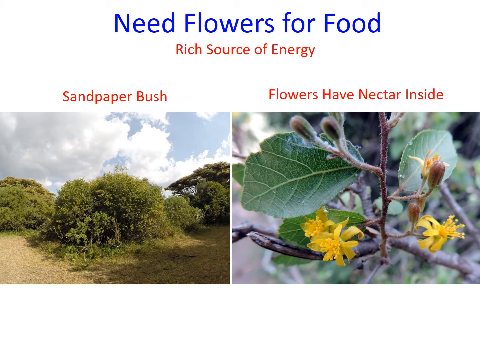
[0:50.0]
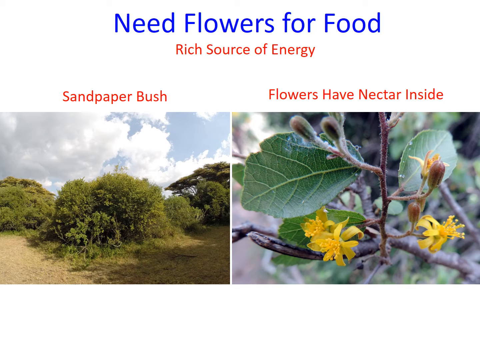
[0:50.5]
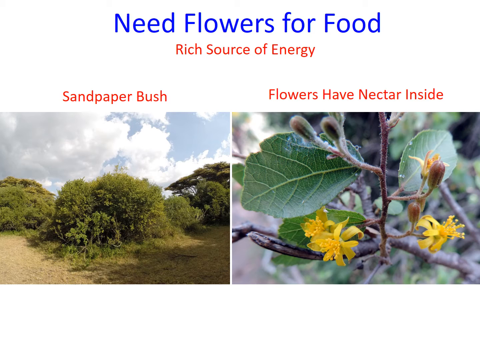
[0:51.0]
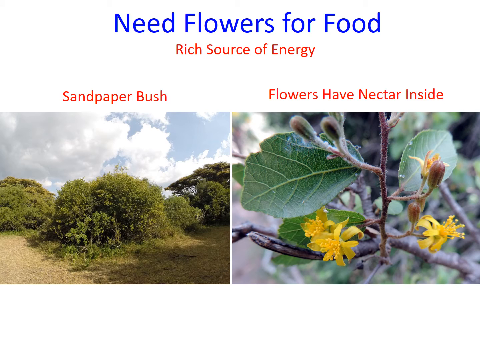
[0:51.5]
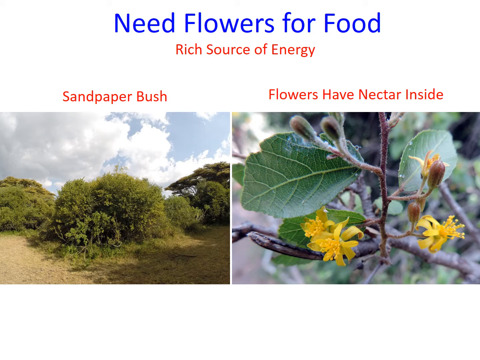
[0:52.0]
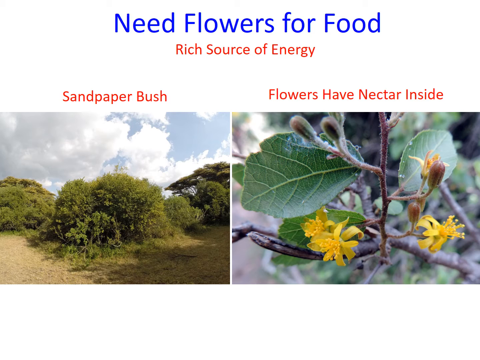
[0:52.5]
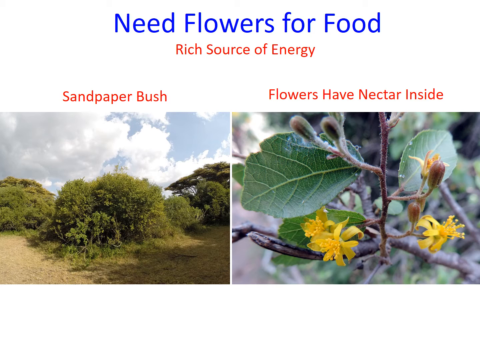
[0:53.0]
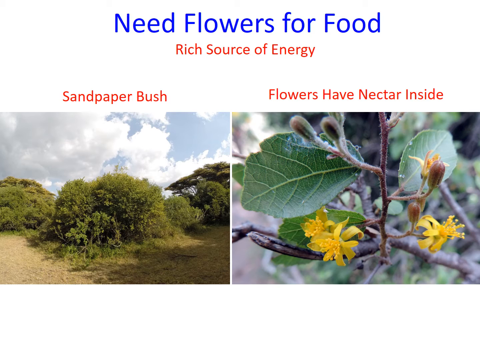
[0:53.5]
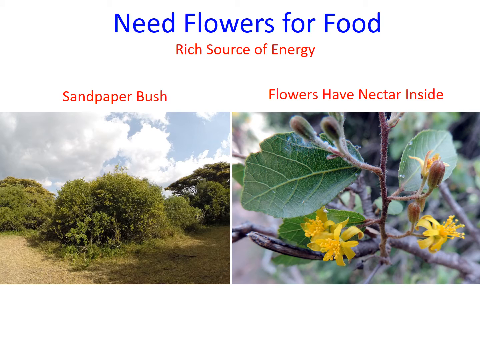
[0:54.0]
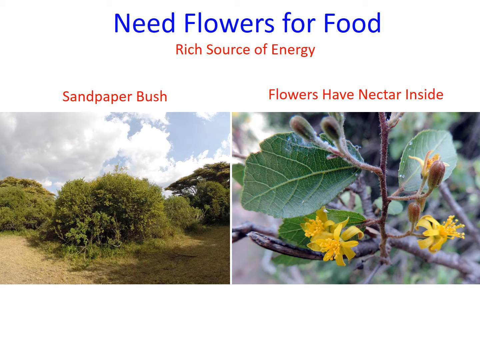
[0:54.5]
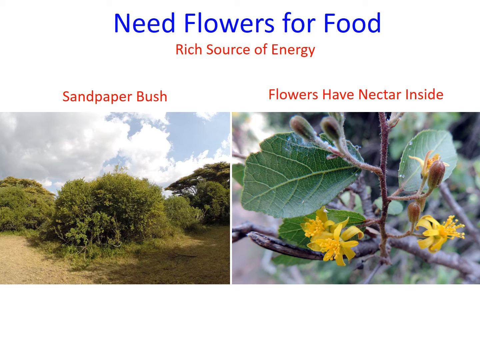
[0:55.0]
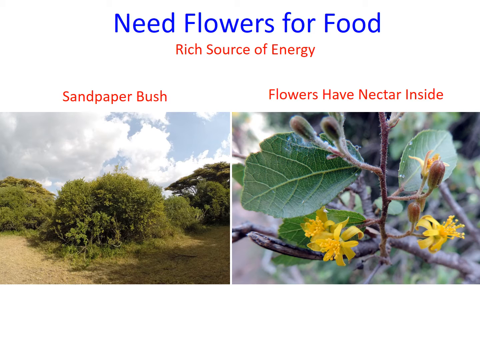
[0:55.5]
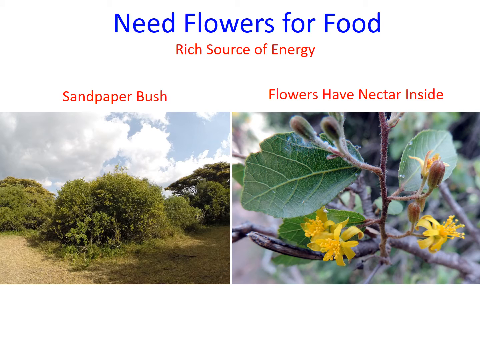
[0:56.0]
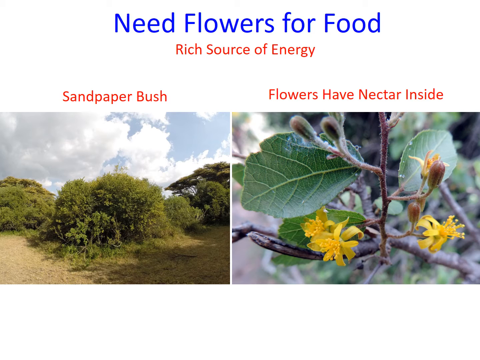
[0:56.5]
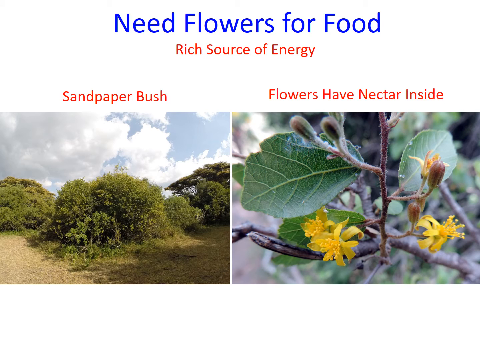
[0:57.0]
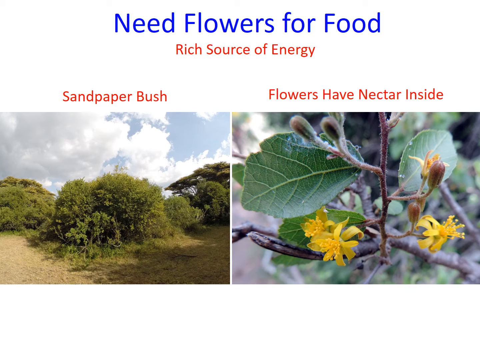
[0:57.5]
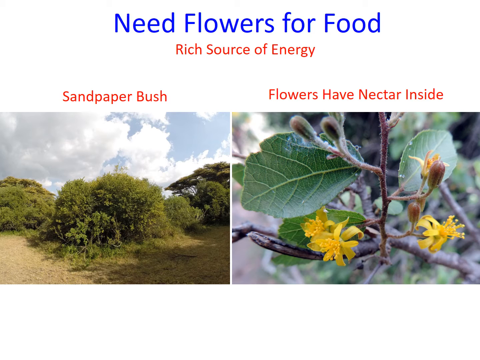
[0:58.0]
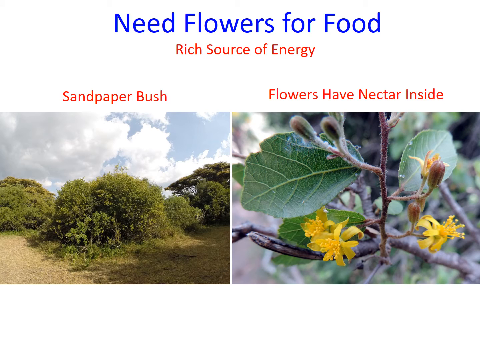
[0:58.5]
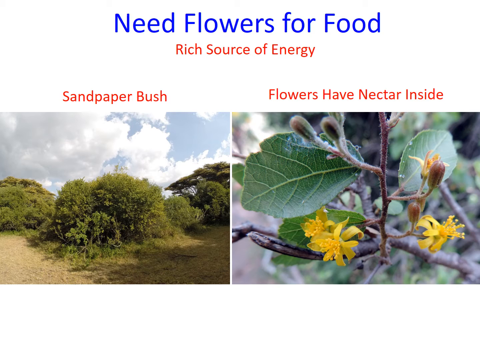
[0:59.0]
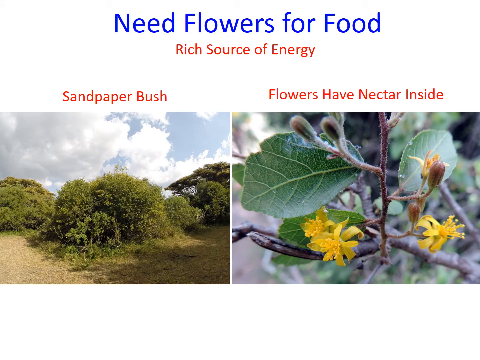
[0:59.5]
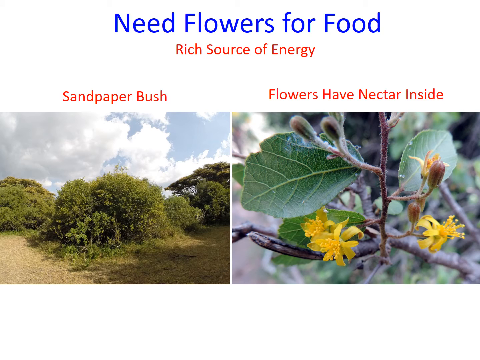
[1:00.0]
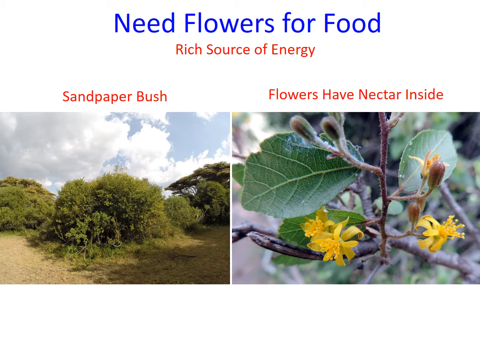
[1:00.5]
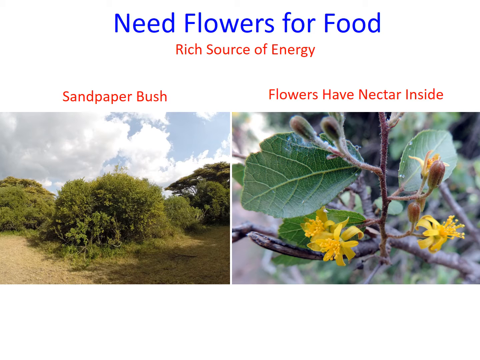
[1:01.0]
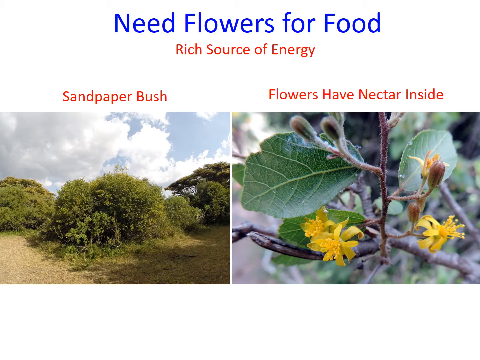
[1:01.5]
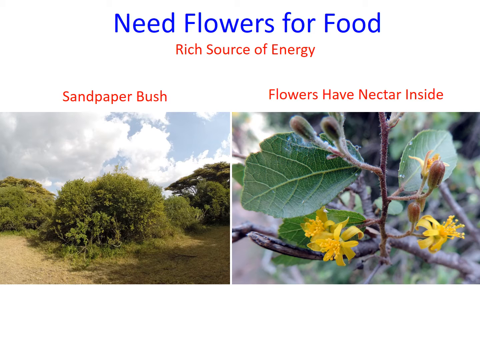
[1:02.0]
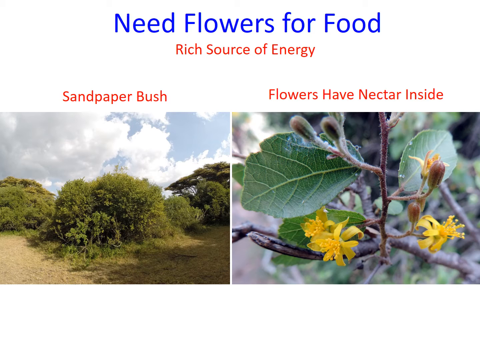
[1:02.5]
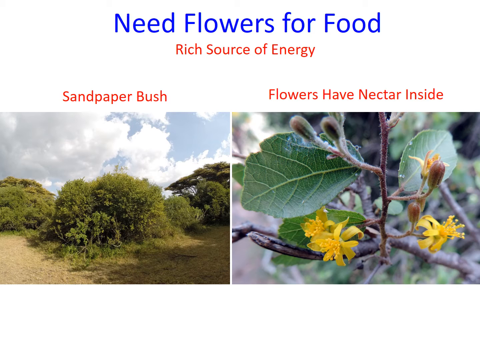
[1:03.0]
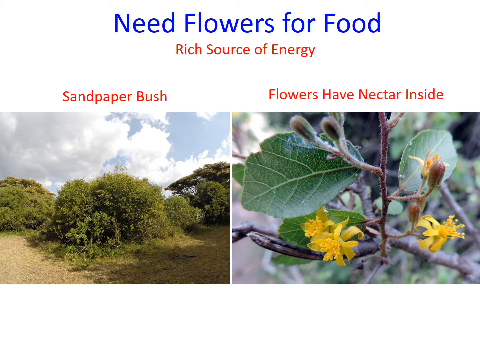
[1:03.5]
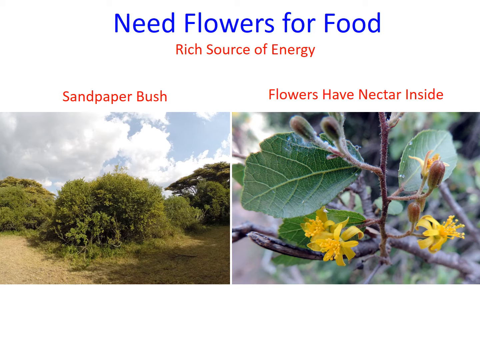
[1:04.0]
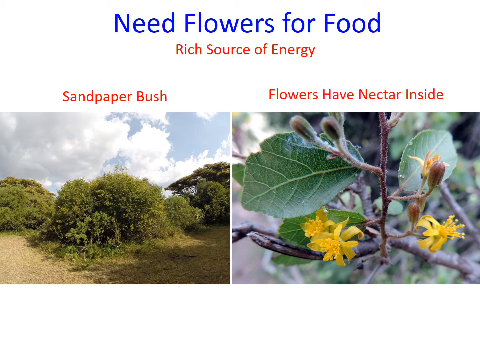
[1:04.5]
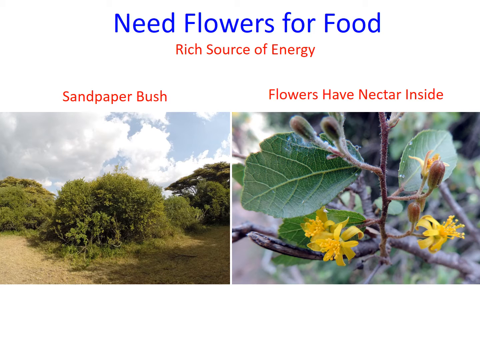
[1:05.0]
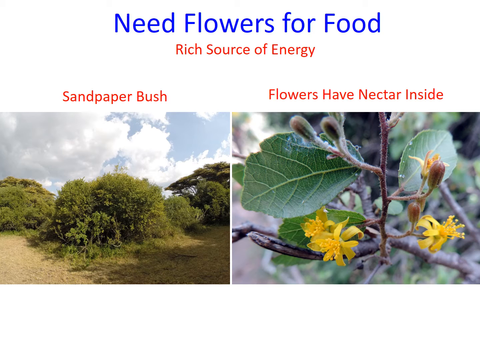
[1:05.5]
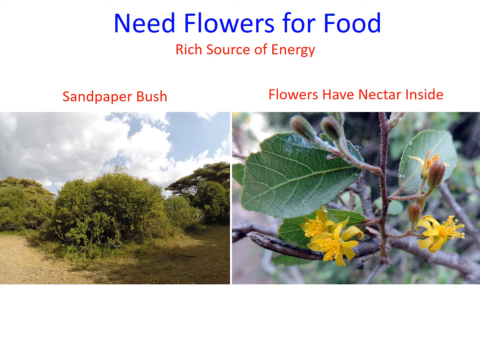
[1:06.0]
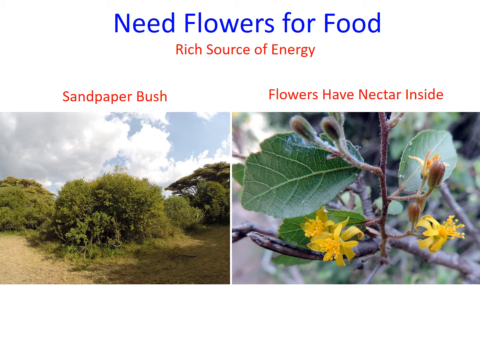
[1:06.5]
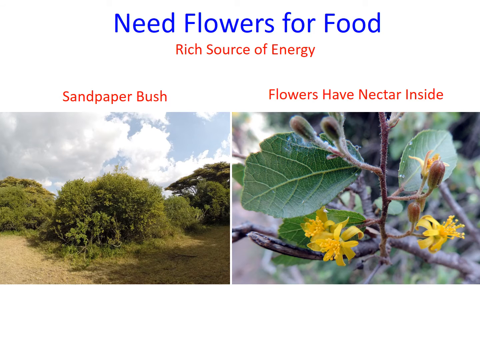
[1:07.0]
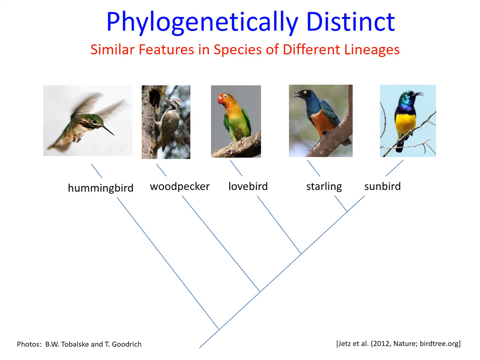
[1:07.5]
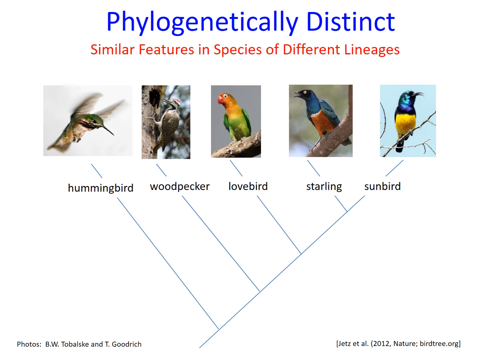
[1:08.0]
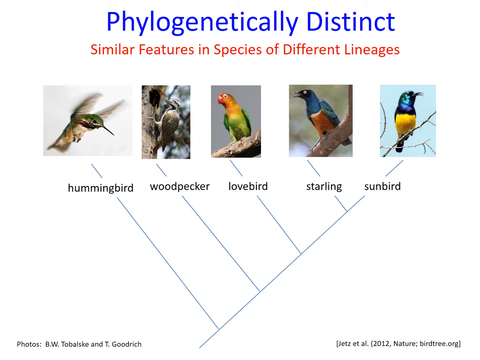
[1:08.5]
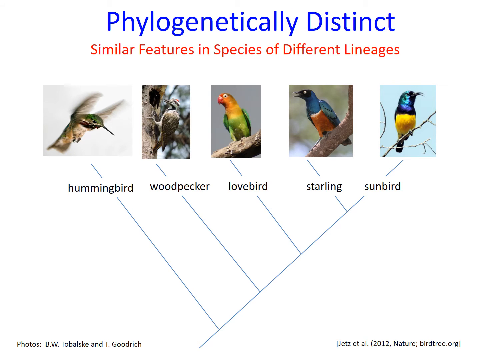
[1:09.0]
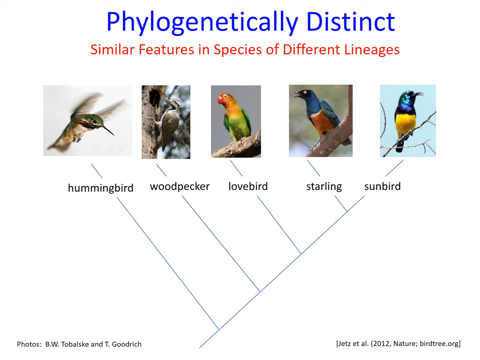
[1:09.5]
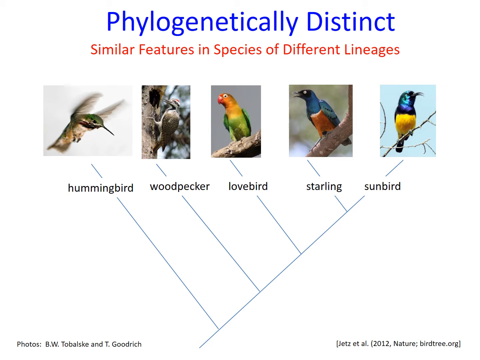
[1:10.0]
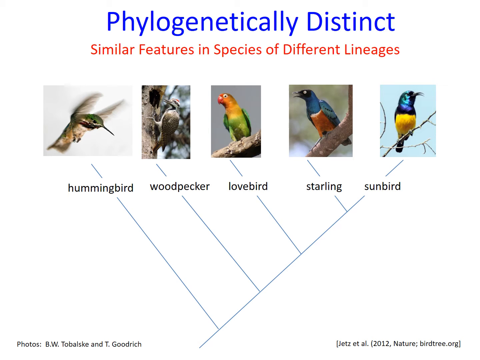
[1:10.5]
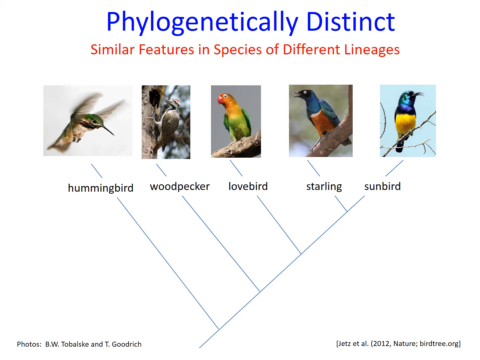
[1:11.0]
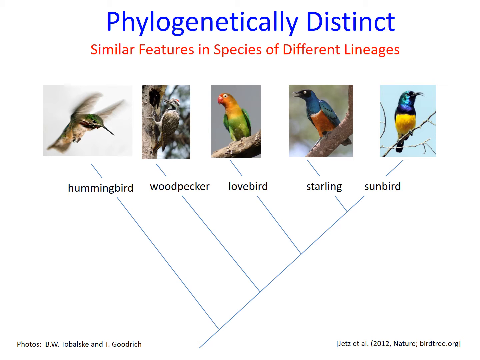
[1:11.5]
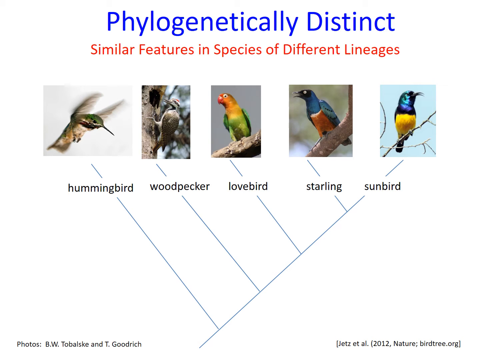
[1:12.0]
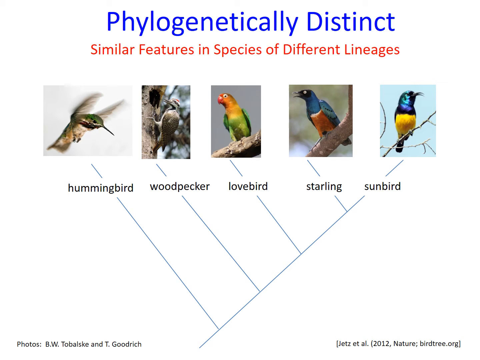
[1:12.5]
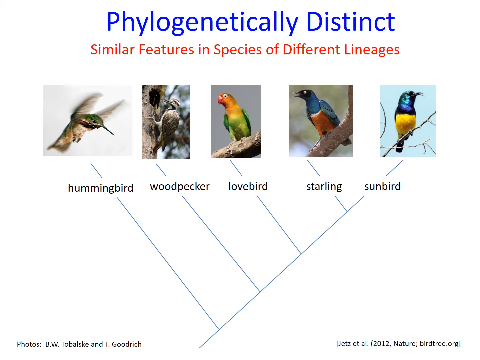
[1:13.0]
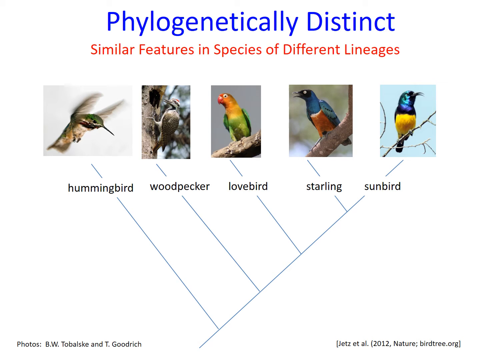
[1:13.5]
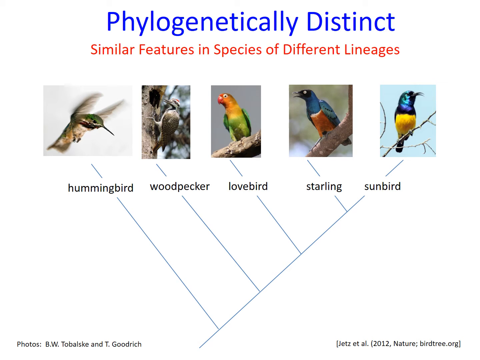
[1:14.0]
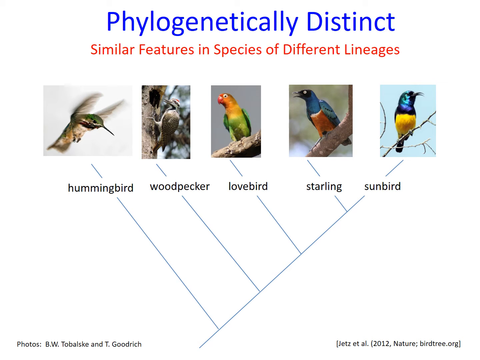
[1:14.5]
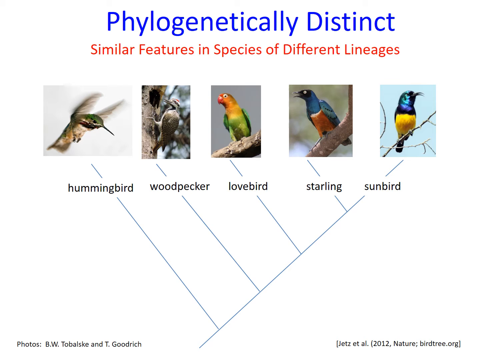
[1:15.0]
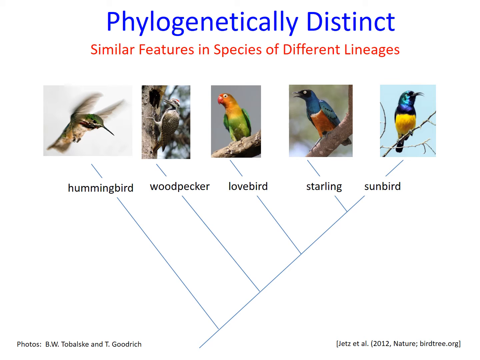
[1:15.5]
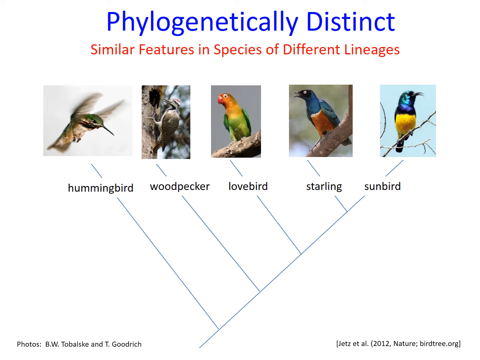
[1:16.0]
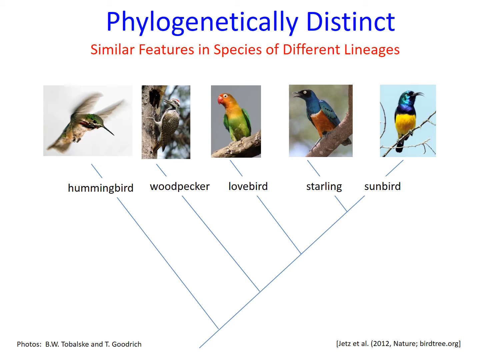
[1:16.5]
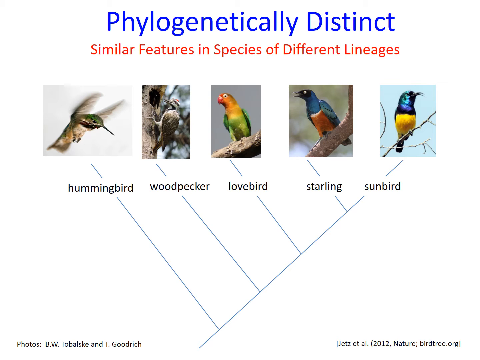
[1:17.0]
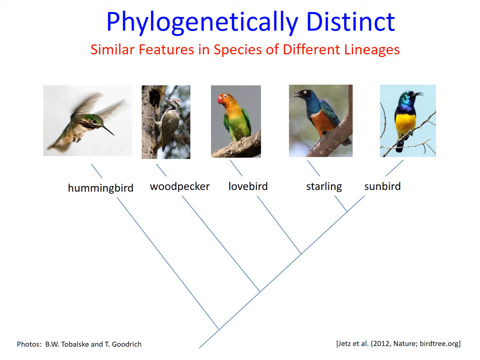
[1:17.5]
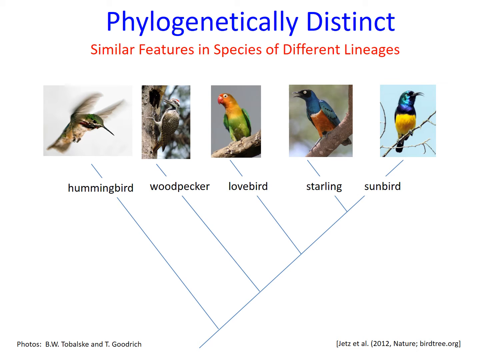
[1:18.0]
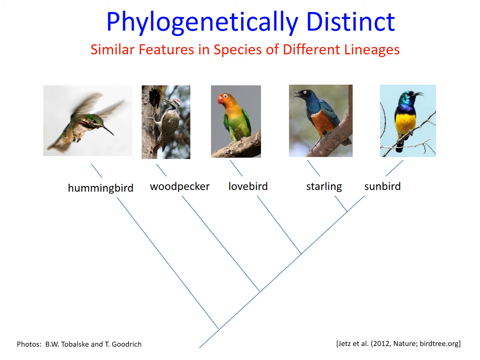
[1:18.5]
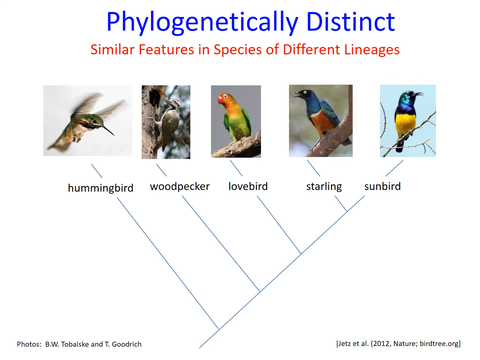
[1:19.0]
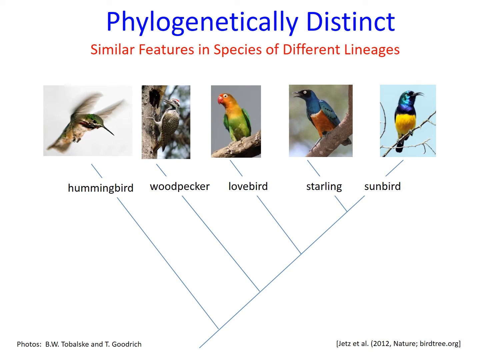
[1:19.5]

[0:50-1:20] A bush on the left side of the screen is called the San David Bush. On the right side, text reads "flowers of nectar inside," and leaves and flowers are shown there. Text reads "phylogenetically distinct," listing the hummingbird, woodpecker, lovebird, starling, and sunbird. A green area on a graph contrasts with the left and right sections of the screen.